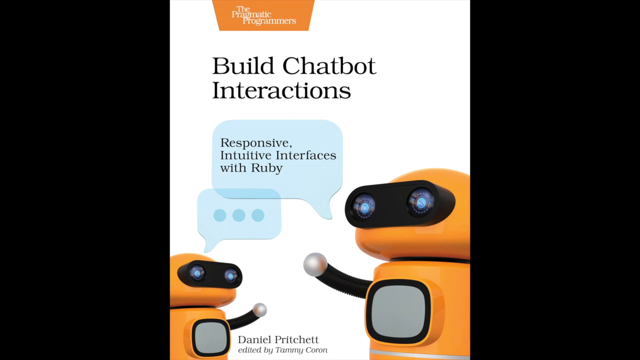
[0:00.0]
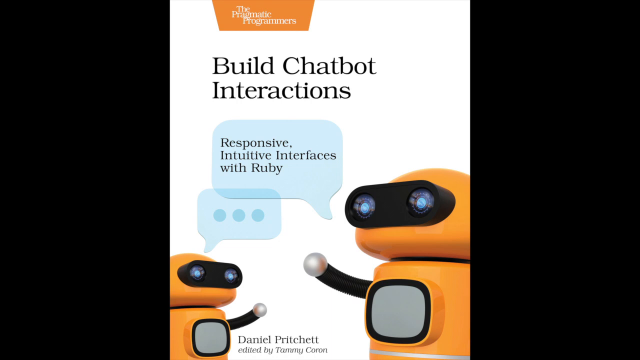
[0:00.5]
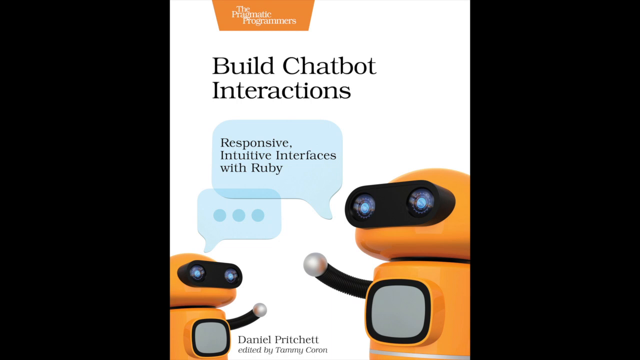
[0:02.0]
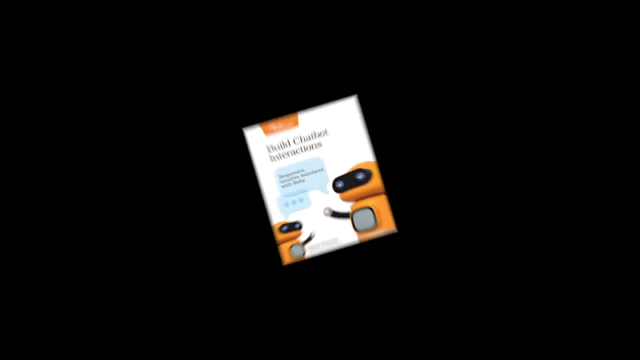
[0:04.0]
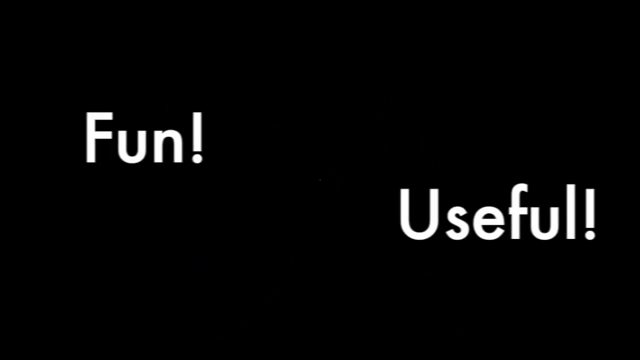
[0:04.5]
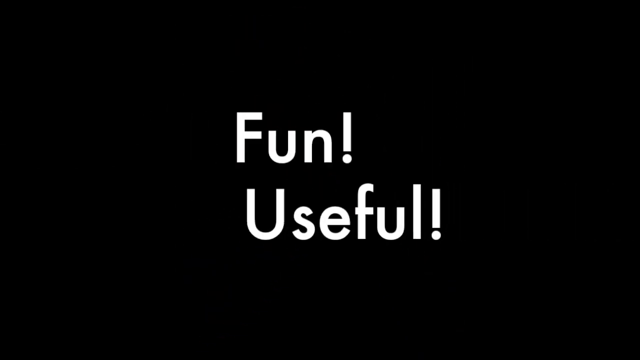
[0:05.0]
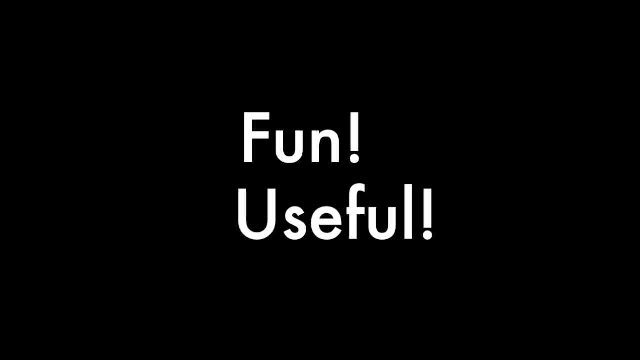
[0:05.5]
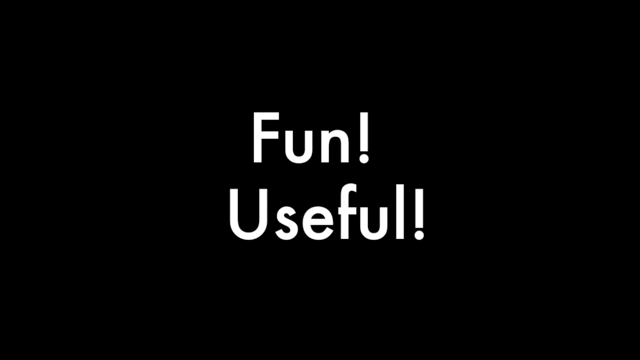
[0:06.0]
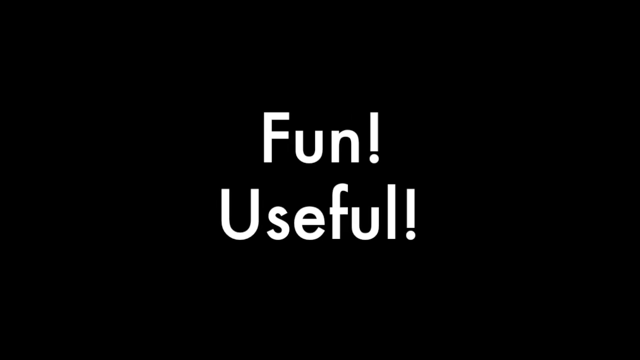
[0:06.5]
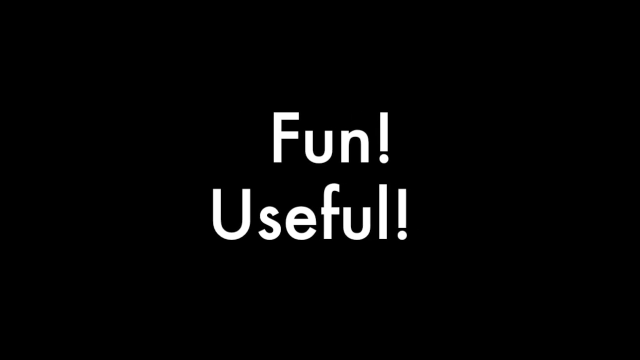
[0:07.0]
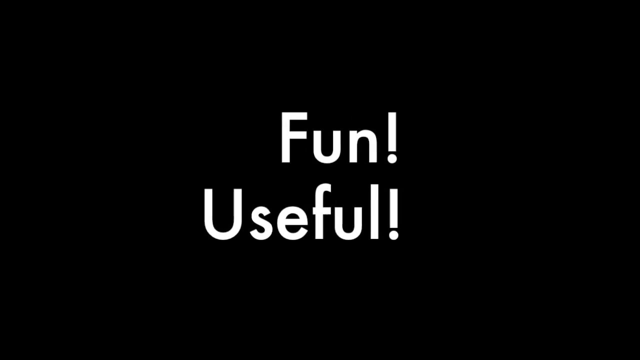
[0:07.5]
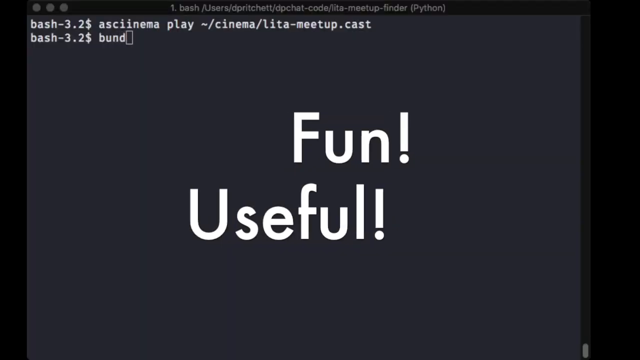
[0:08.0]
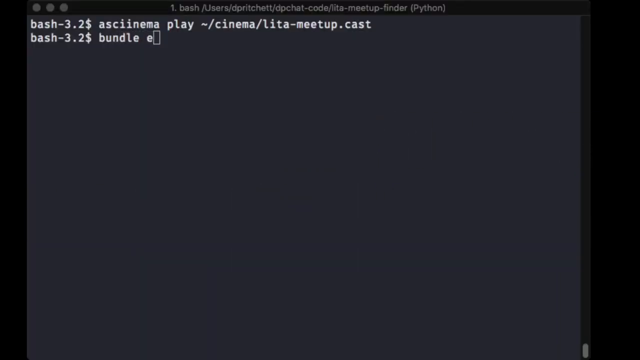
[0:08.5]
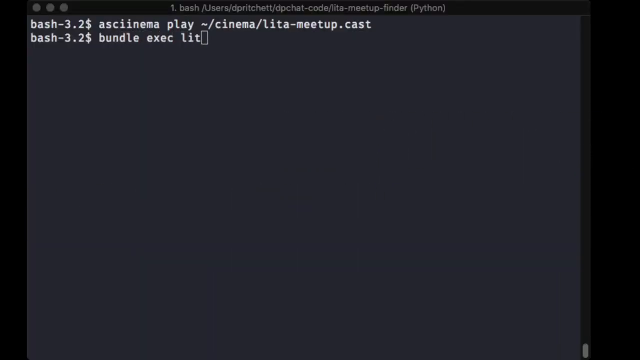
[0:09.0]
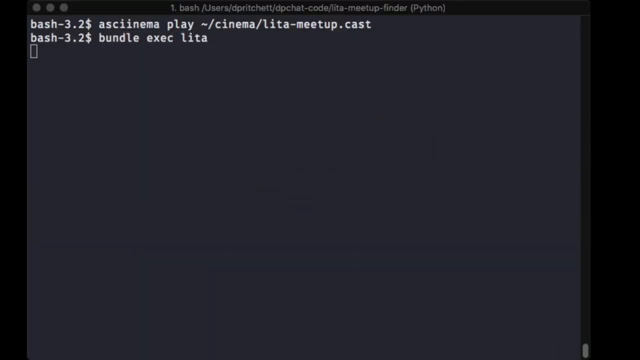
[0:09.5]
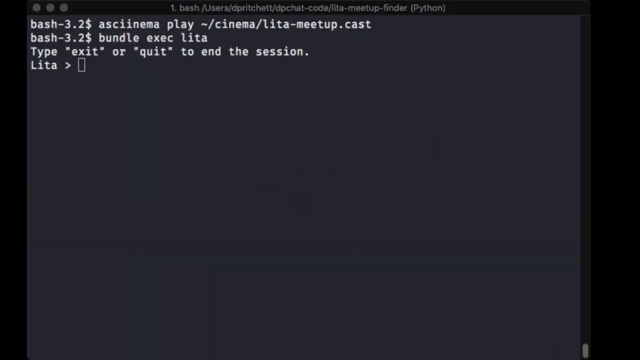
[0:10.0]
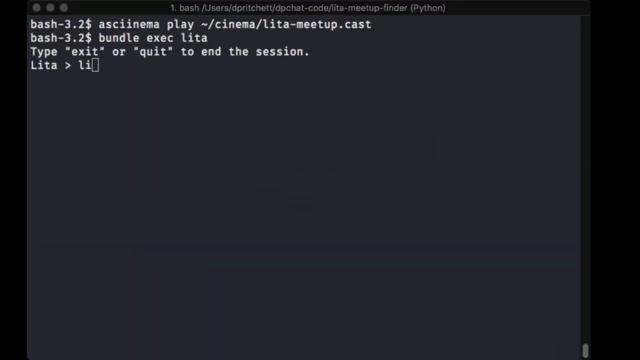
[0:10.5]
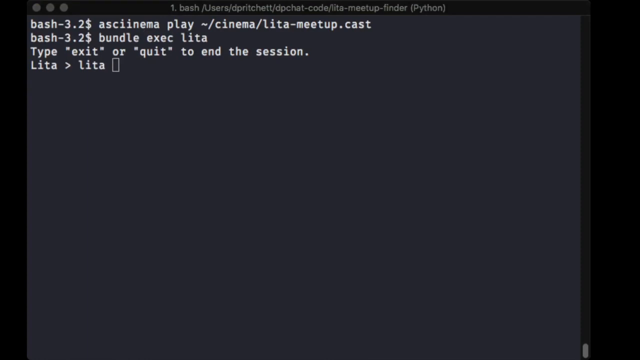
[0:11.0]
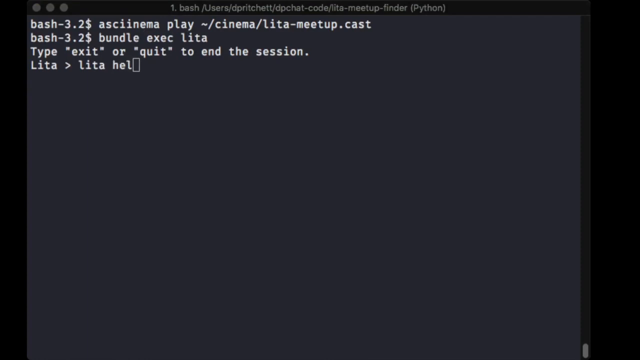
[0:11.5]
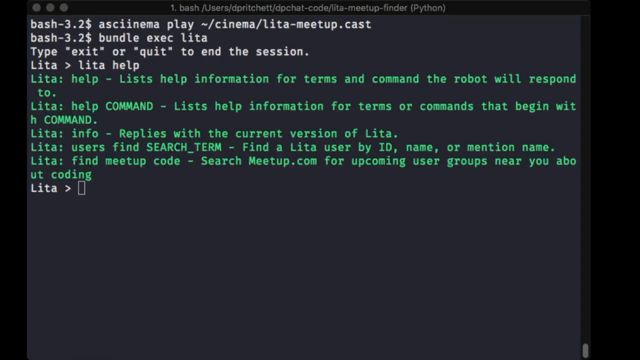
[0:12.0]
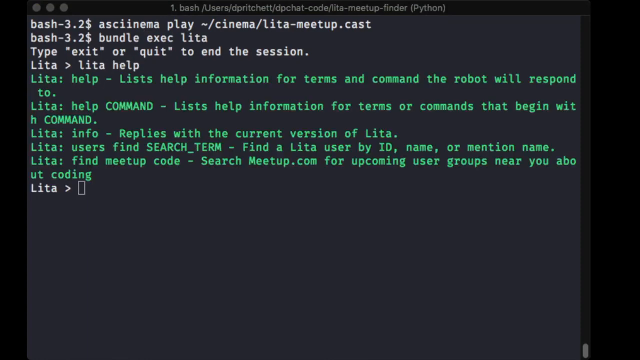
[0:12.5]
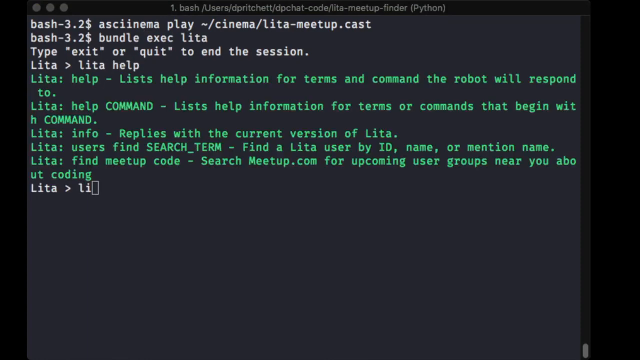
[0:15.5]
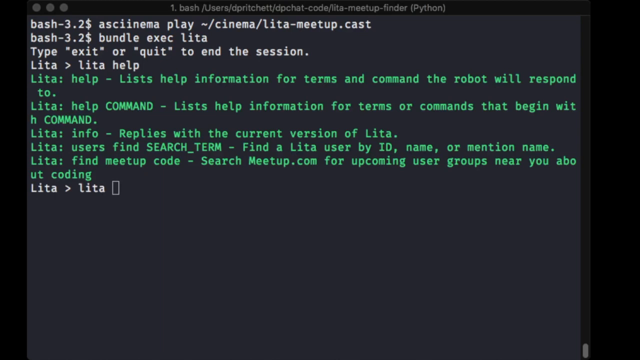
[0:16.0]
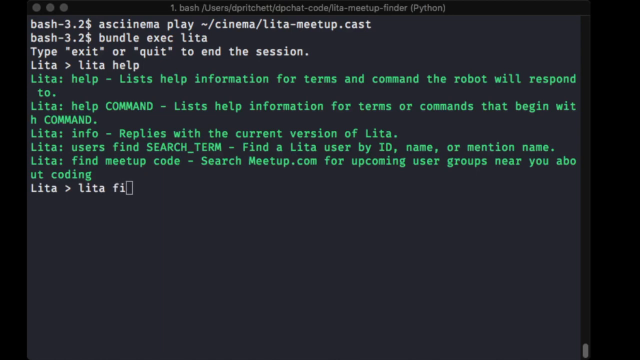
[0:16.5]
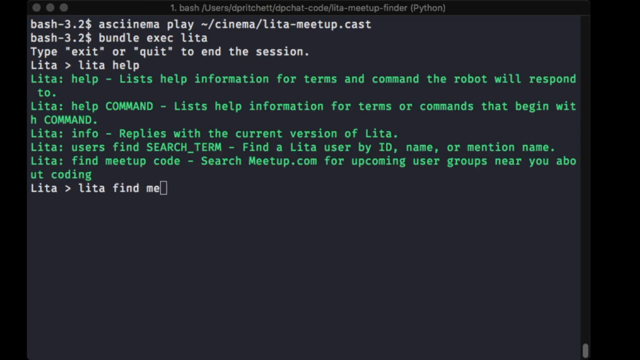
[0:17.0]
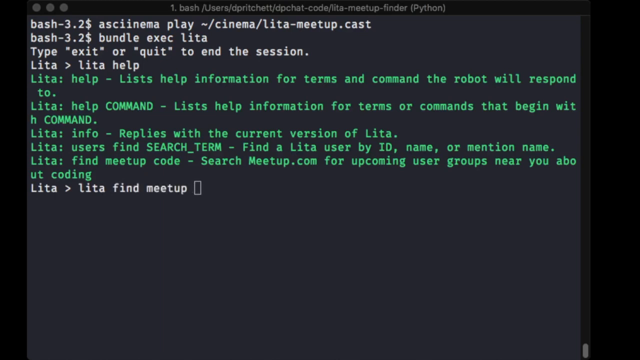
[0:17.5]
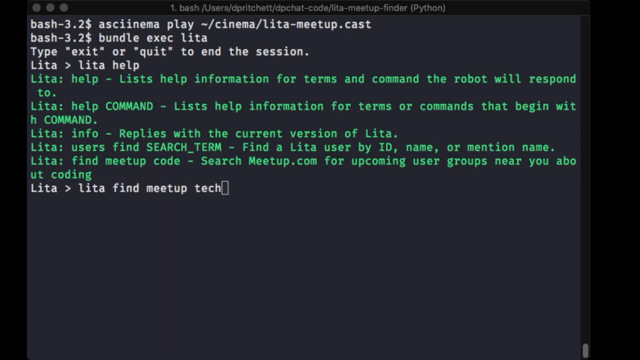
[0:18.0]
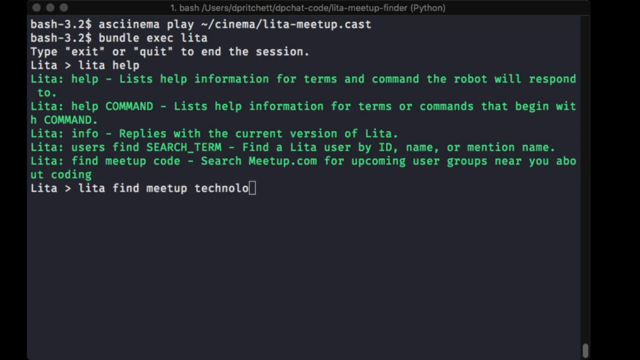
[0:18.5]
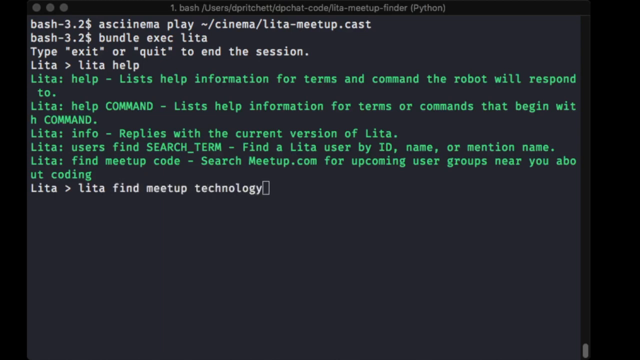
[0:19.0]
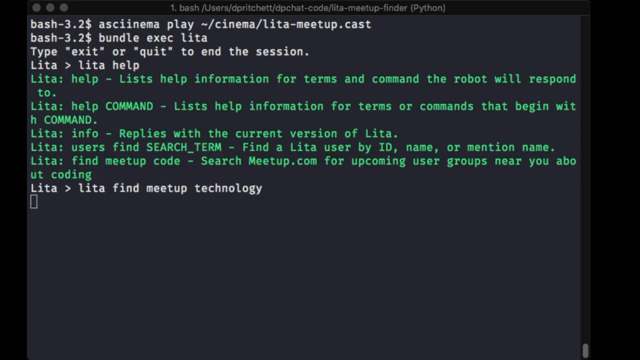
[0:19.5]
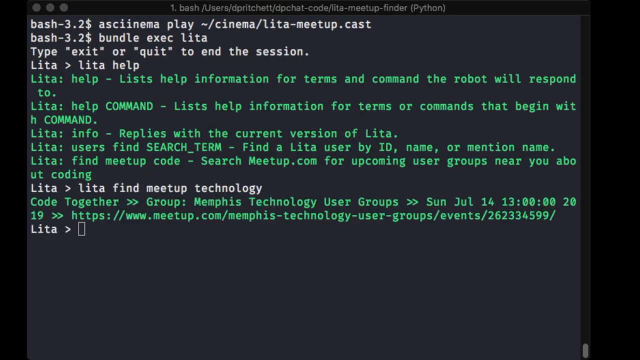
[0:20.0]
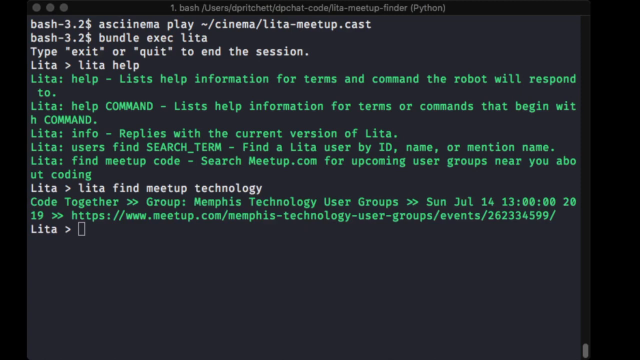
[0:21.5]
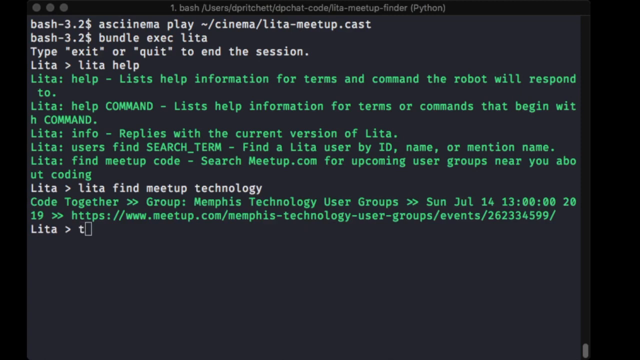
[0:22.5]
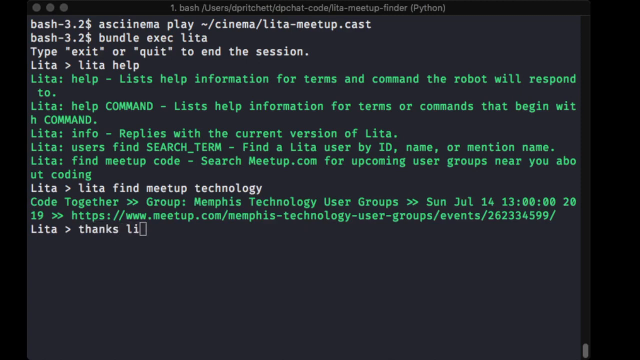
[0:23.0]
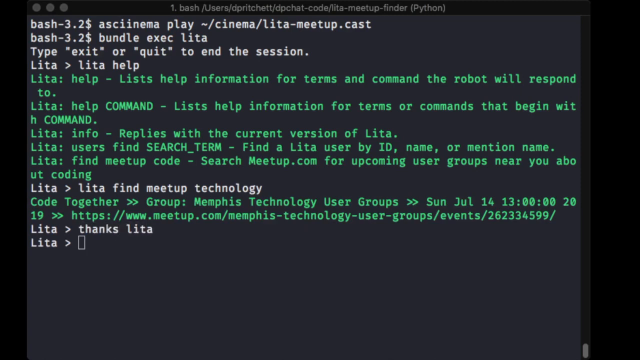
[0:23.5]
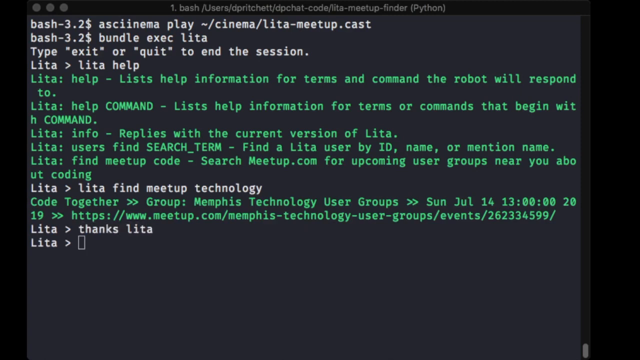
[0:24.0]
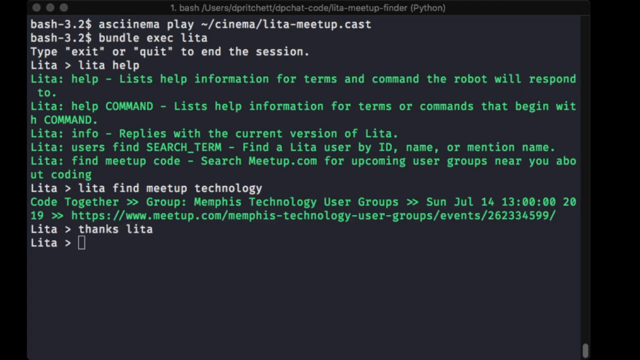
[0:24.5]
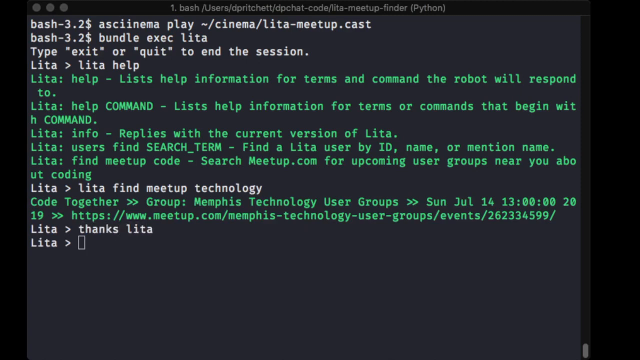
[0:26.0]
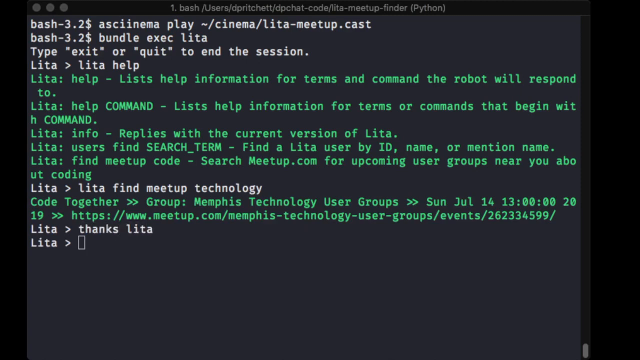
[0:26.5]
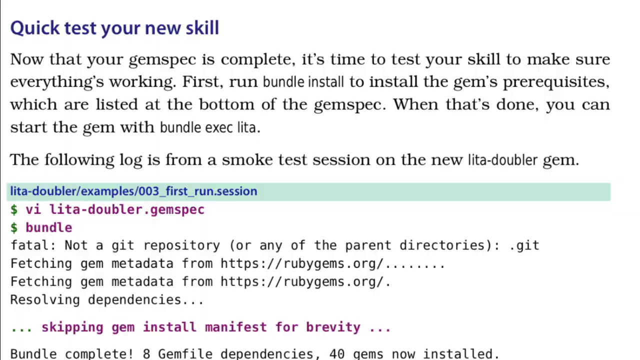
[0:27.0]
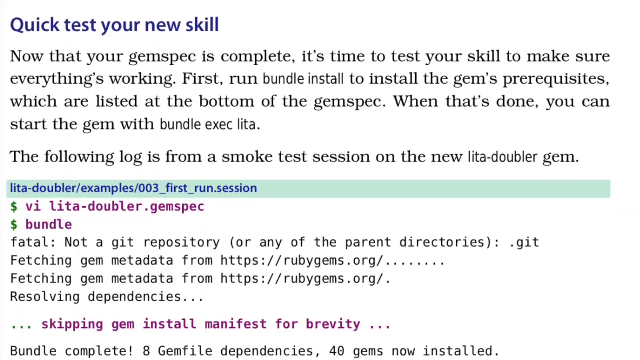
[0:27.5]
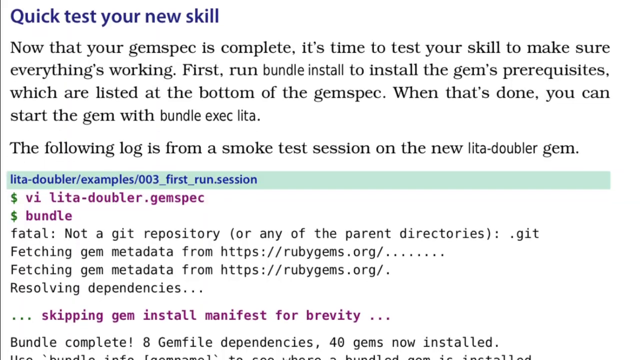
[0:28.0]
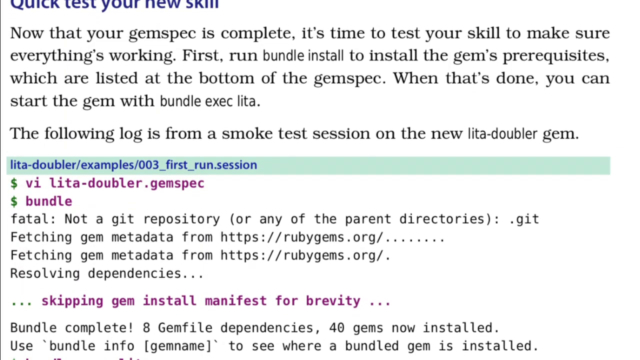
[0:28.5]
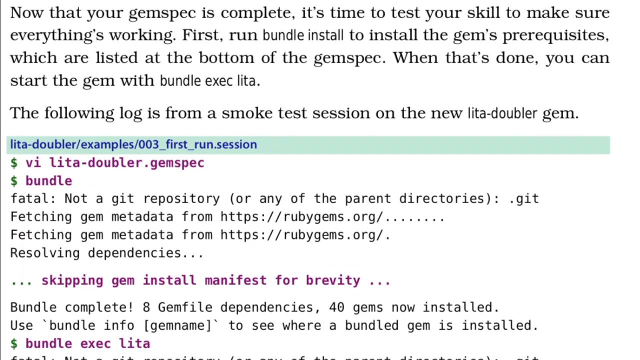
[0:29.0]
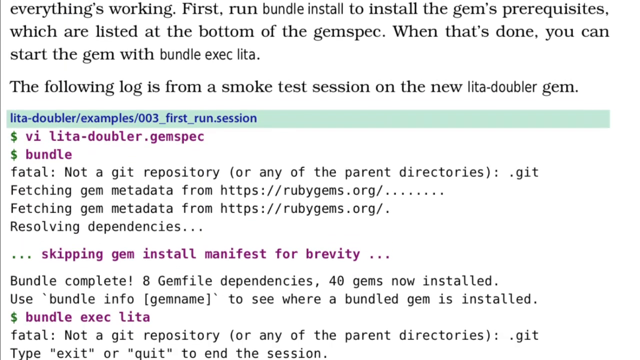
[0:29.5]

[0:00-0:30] The video opens with an image framed by two black borders on the left and right, containing text and an image. At the top, orange text reads "The Pragmatic Programmers." This box is white. Beneath it, black text reads "build chatbot interactions." There are two dialogue bubbles for two orange robots, and in the main box are the words "responsive intuitive interfaces with Ruby." At the bottom of the page is "Daniel Pritchett edited by Tammy Caron." The video transitions to a black screen with the words "fun useful," then to a page of code. A cursor and code appear on the screen from left to right, first in white text, then green, then white, then green, and then white again. That page transitions to a white page of code.